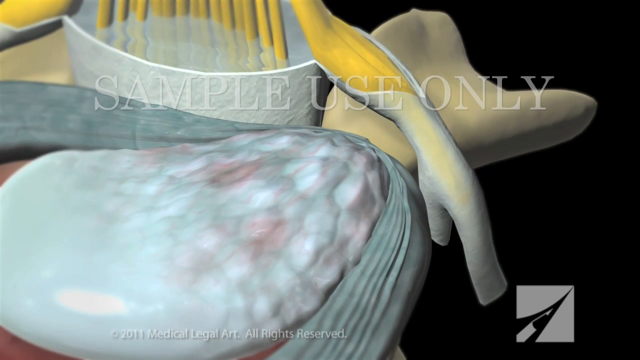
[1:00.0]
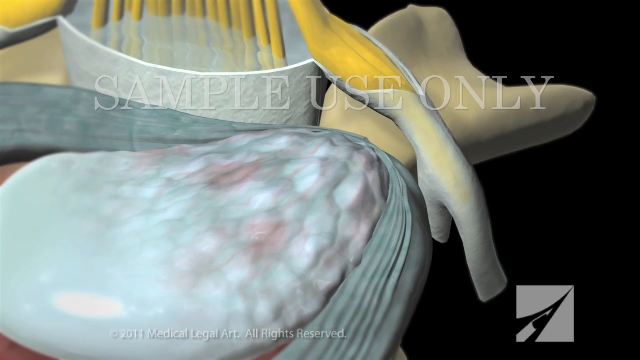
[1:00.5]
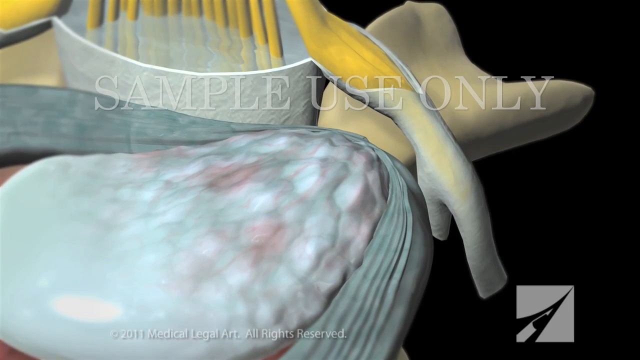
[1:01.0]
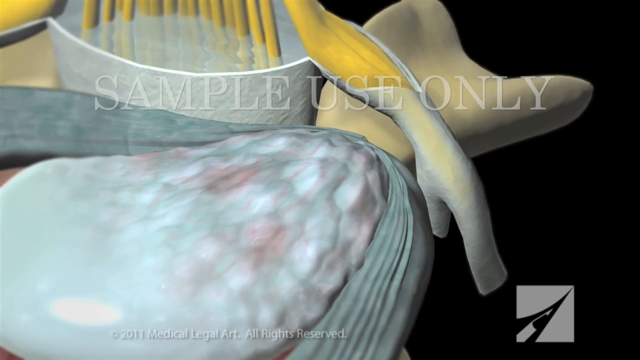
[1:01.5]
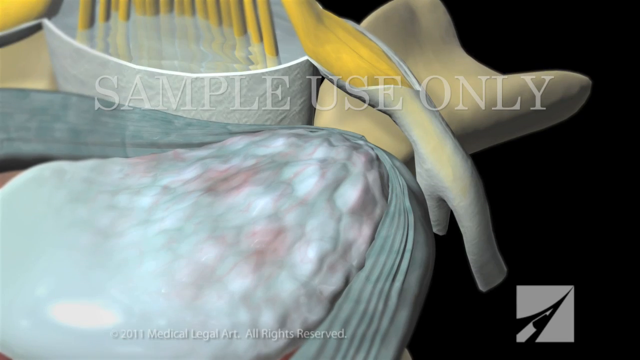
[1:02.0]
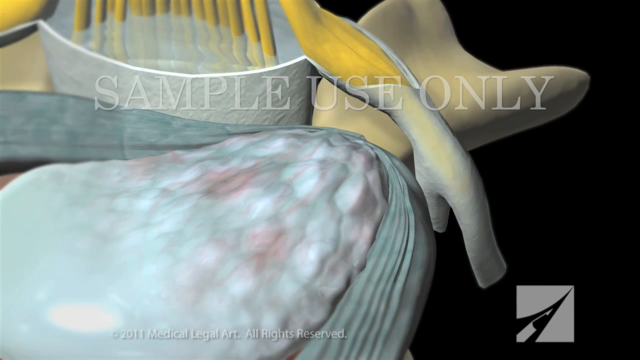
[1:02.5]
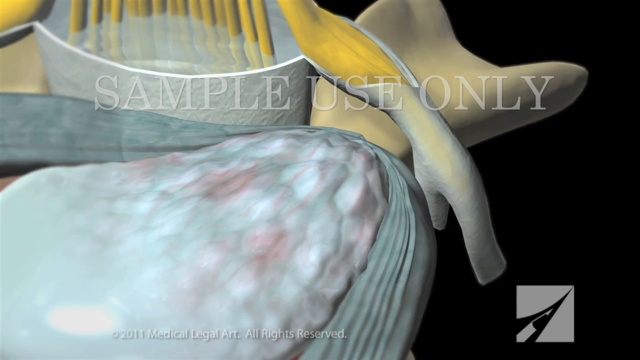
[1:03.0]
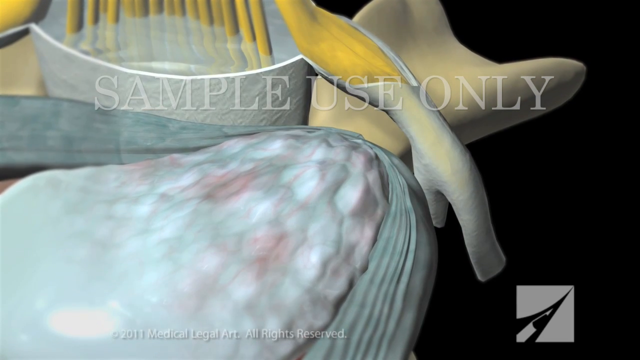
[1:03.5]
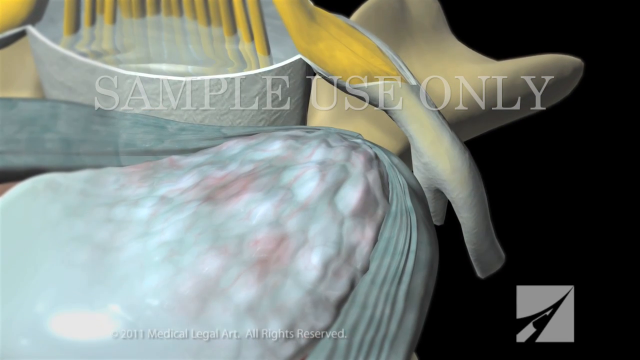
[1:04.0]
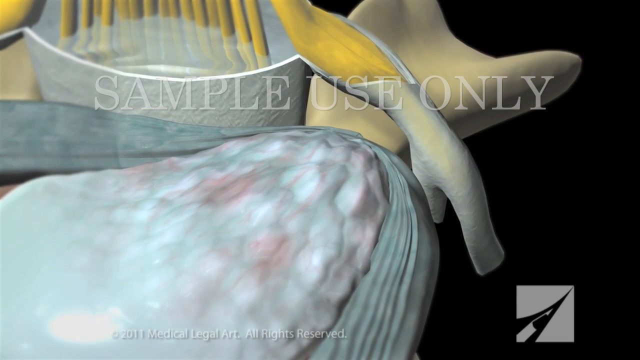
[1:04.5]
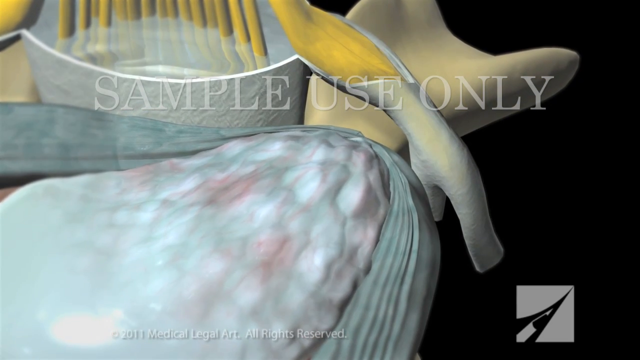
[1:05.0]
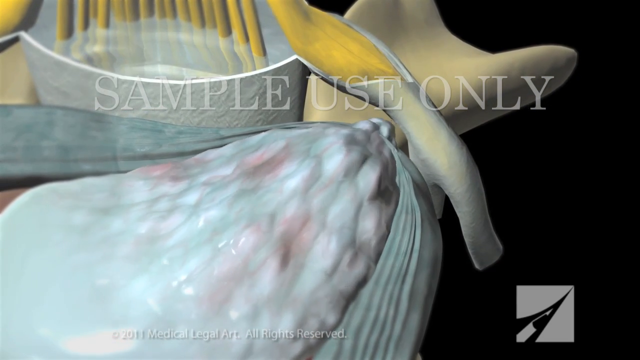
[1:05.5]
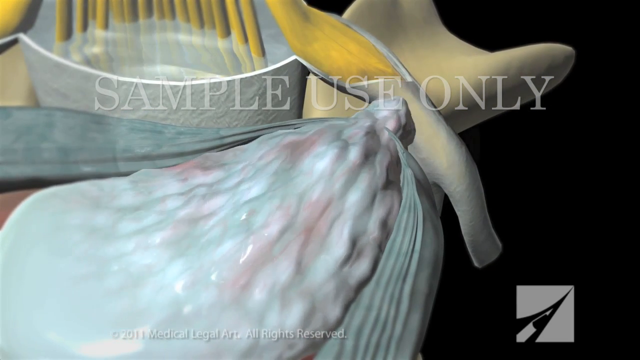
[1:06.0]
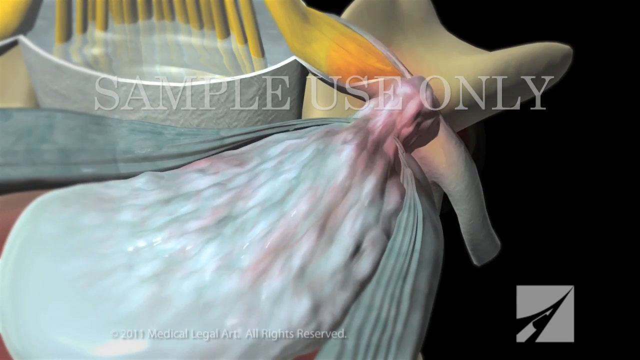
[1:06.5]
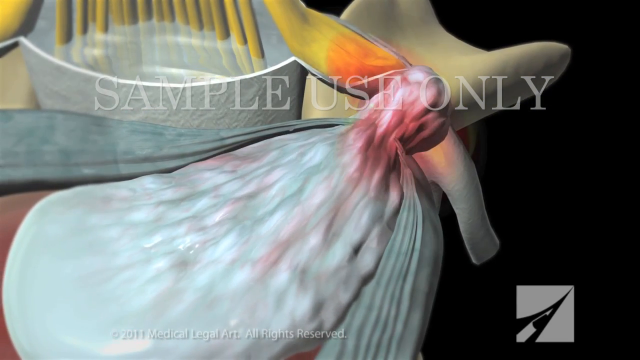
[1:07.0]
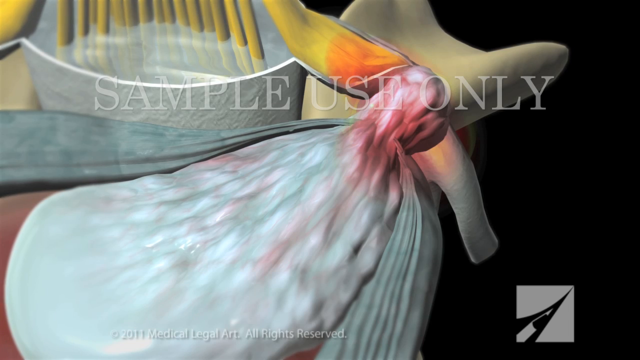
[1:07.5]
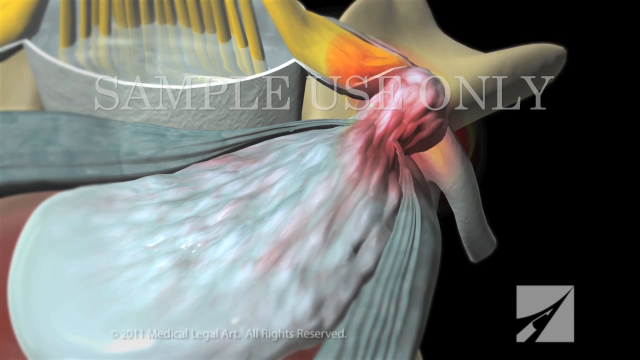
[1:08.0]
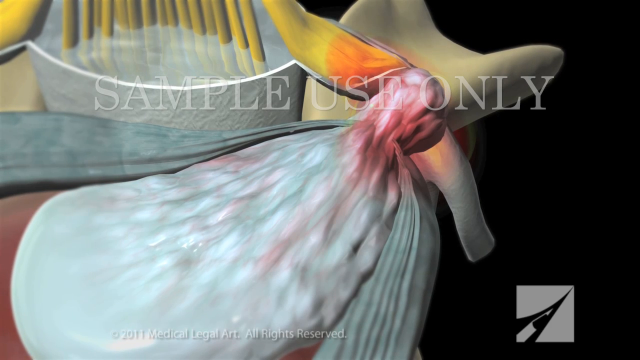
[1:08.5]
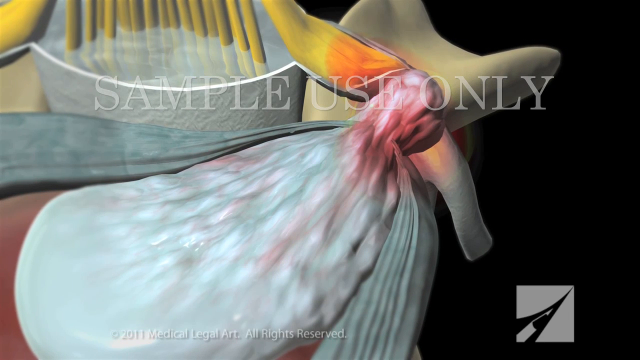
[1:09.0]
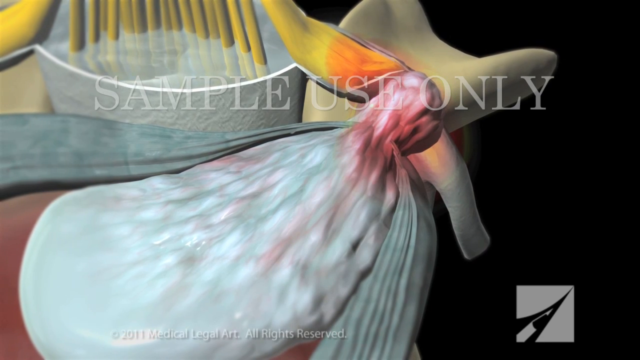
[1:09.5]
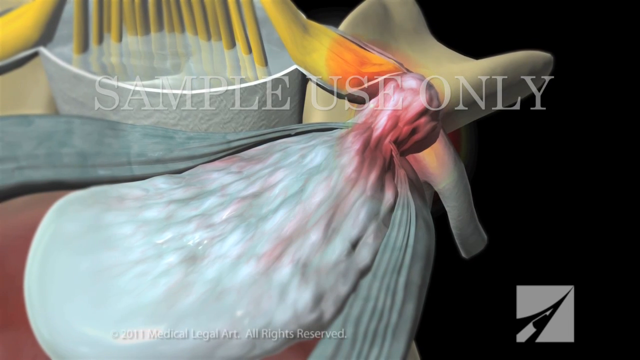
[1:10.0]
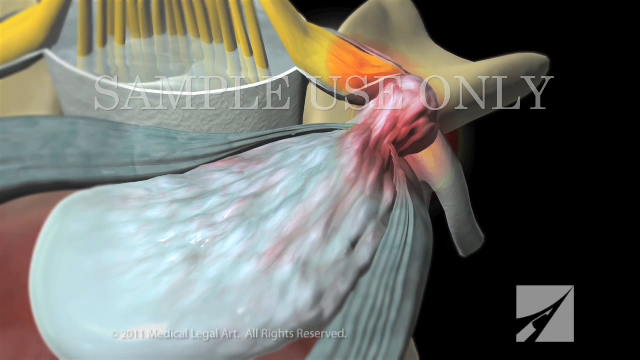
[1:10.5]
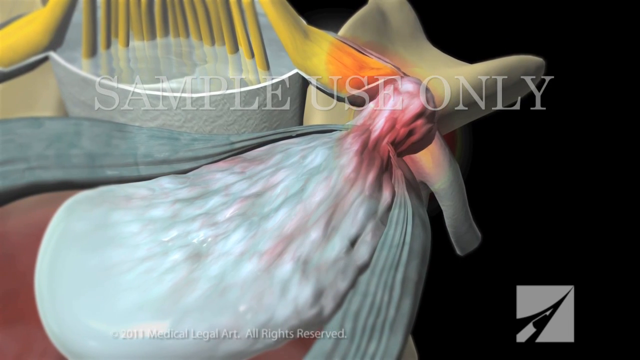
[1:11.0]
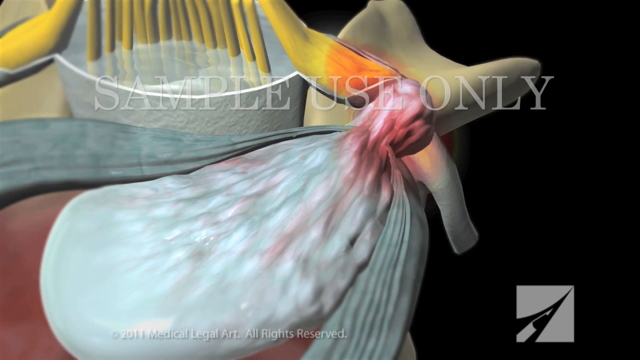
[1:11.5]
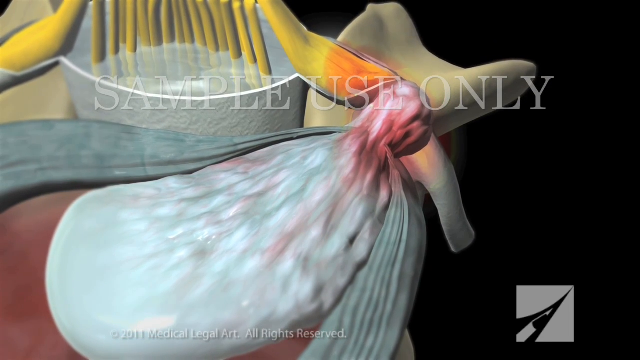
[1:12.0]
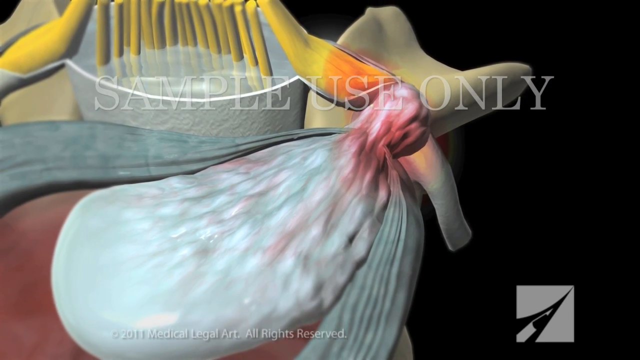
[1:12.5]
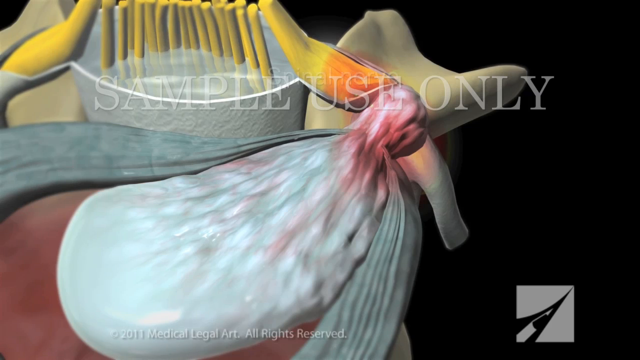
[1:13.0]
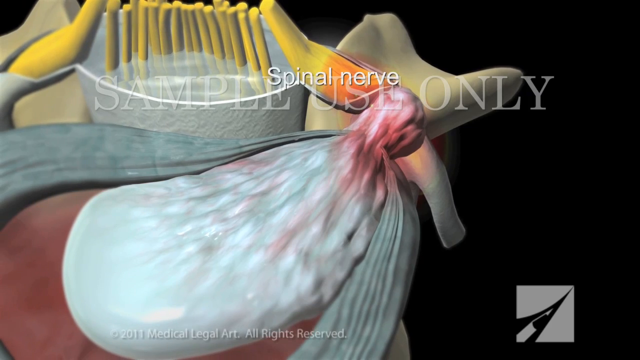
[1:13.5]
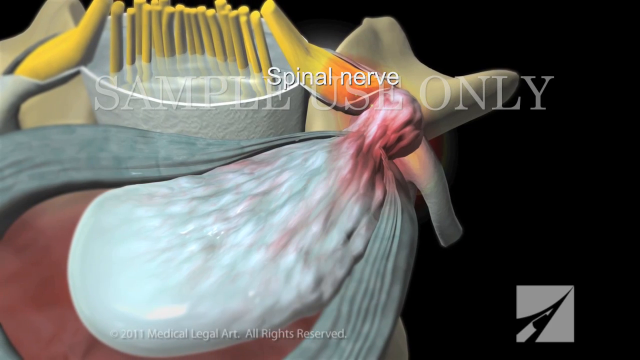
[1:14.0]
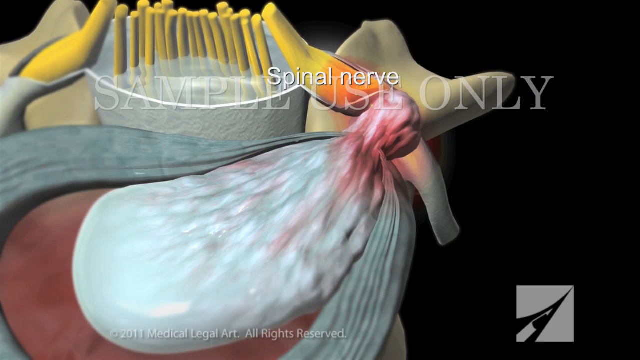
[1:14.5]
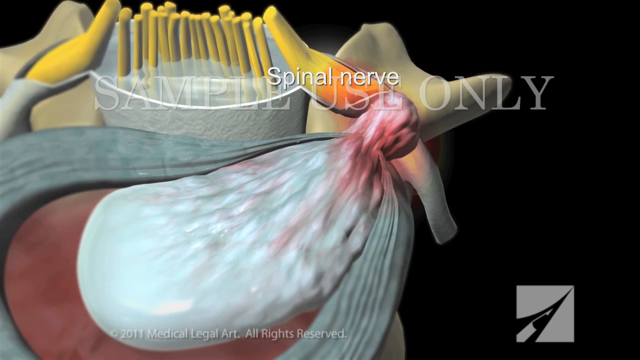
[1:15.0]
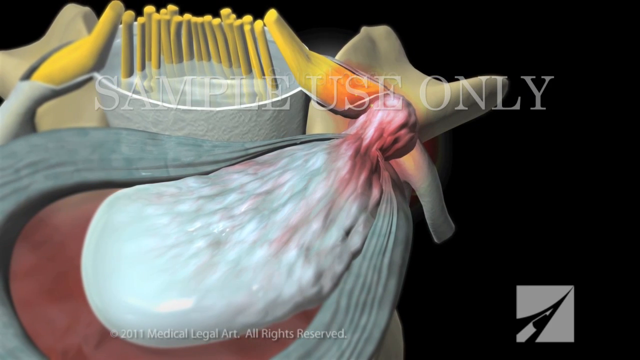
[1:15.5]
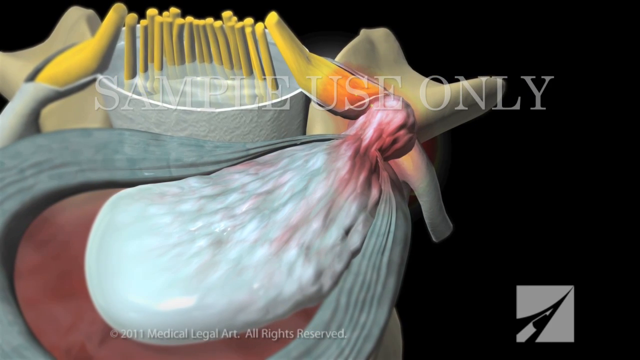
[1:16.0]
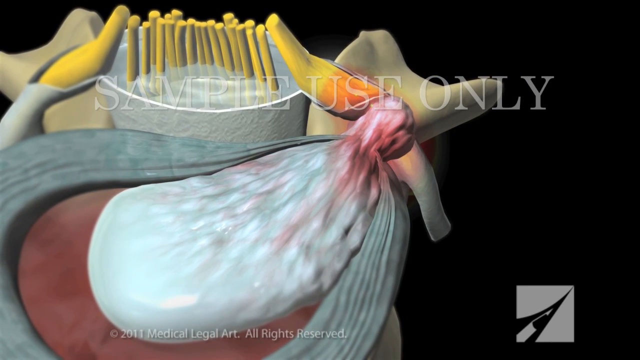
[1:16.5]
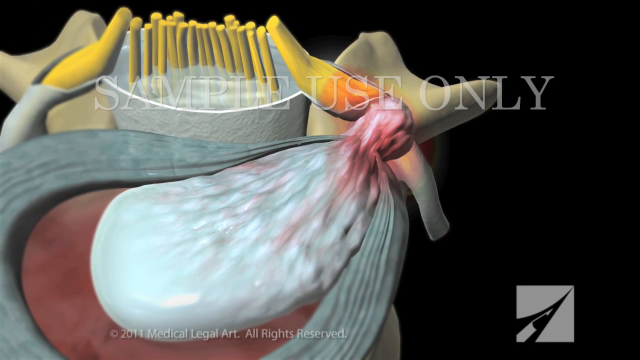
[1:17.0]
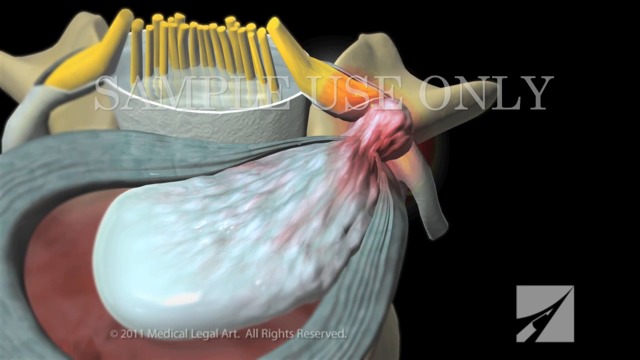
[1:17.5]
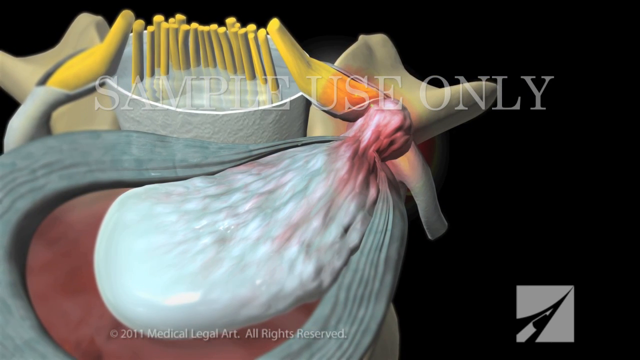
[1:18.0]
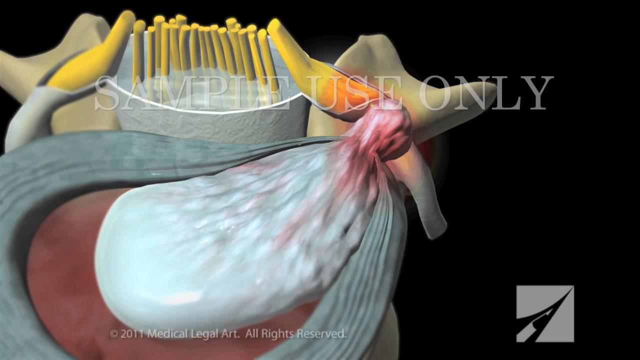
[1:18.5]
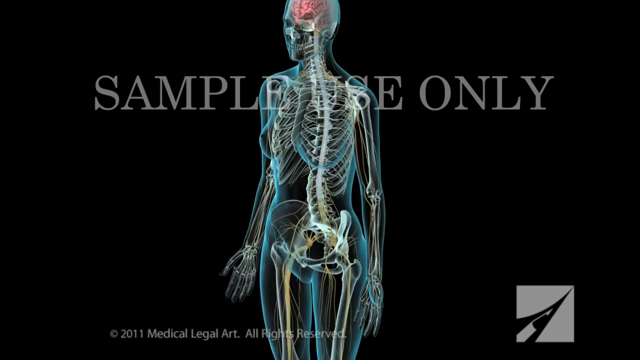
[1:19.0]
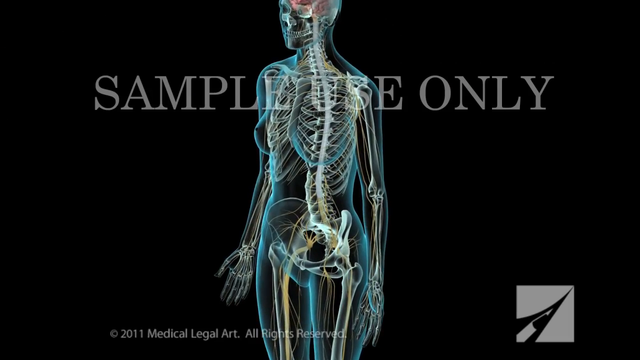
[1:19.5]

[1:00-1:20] The nucleus pulposus herniates out the upper right quadrant of the vertebra. The background is black, with the gray watermark "sample use only" over the image. At the back of the spine, smaller yellow nerve fibers project up vertically, and to their right and left are larger white nerve fibers, also running vertically, covered in a white sheath that has been cut back to reveal the nerves. The nucleus pulposus presumably herniates through a small wound in the upper right quadrant of the circle it sits in and affects the nerve; the tissue inside it turns pink and bumpy. The nerve it pushes against also turns red and pink, presumably representing pain. On the outside it is surrounded by a lighter gray disc that looks like insulation for the tissue between the vertebrae. A light gray square, some sort of emblem, is in the bottom right corner and stays throughout the video. Once the disc has herniated, a human skeleton inside a clear body appears; the body's gender is not shown, and the ambiguous figure is seen from the left side and front as it turns. It is entirely see-through, showing the muscular system, some of the veins and primarily the skeleton. The view pans back to black, and white text reads "spinal nerve." A faint outline of a person appears with hands facing forward, with the light gray "sample use only" watermark across the top on a black background. The outline is a very faint light blue, and the nerves and skeleton are somewhat translucent but very visible. The figure appears to be female, with the outline of both breasts visible. She faces to the left, arms at her sides with palms facing forward.